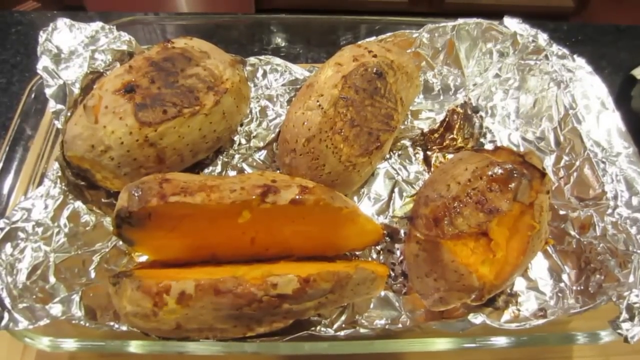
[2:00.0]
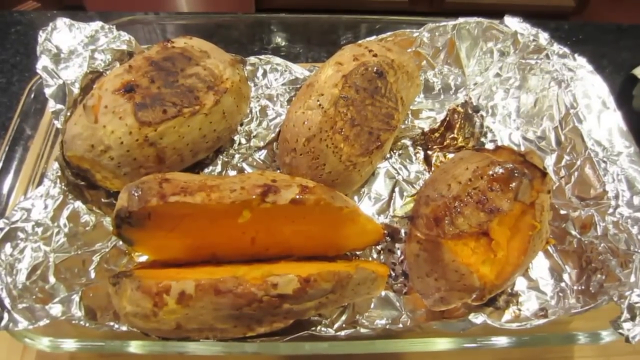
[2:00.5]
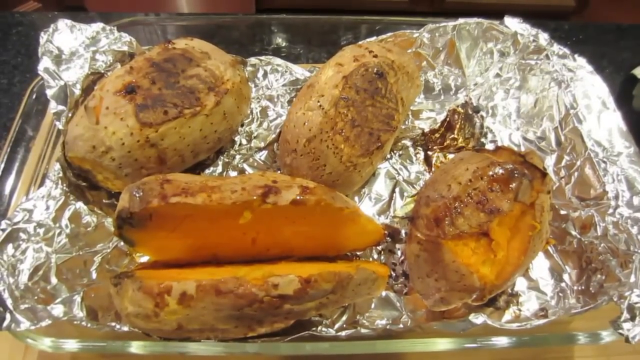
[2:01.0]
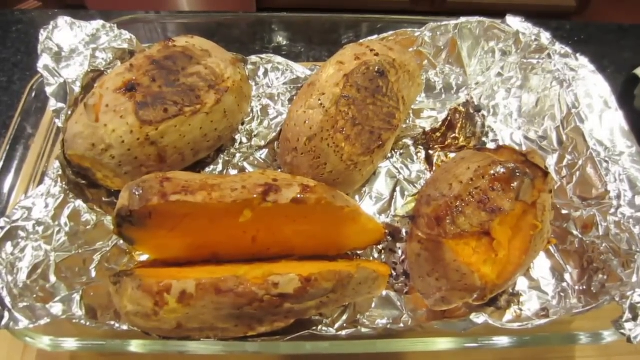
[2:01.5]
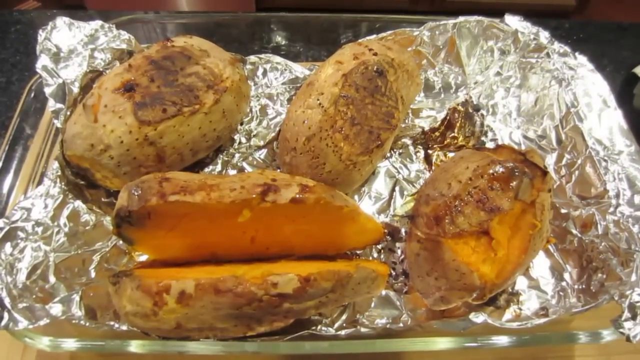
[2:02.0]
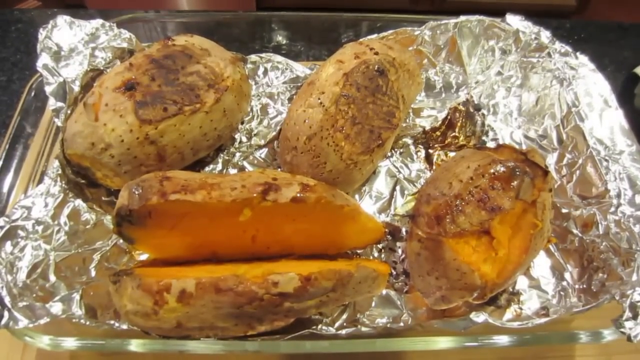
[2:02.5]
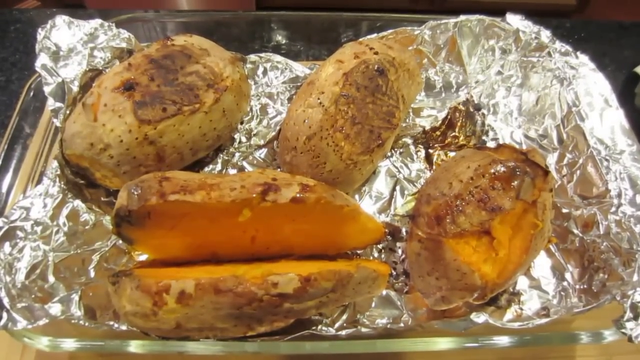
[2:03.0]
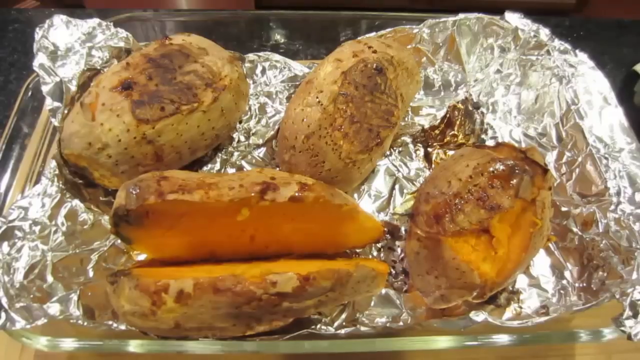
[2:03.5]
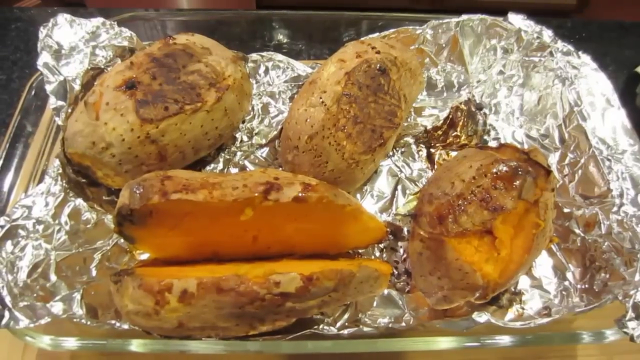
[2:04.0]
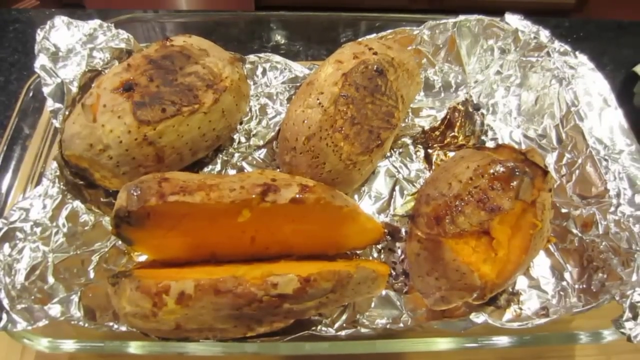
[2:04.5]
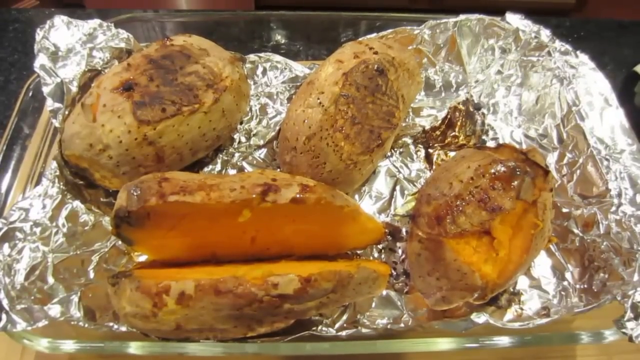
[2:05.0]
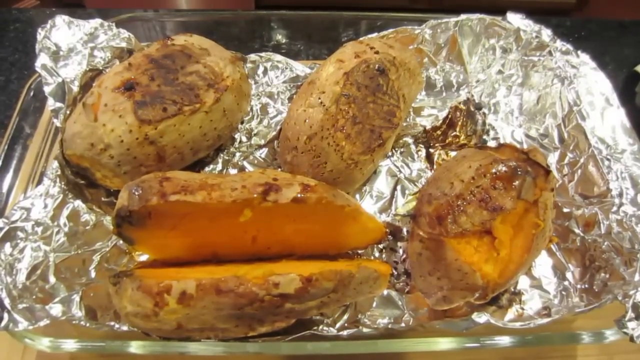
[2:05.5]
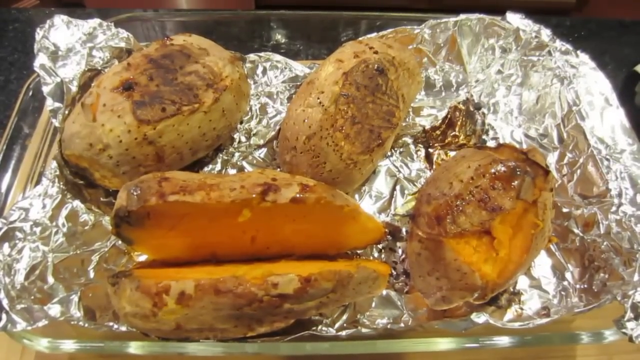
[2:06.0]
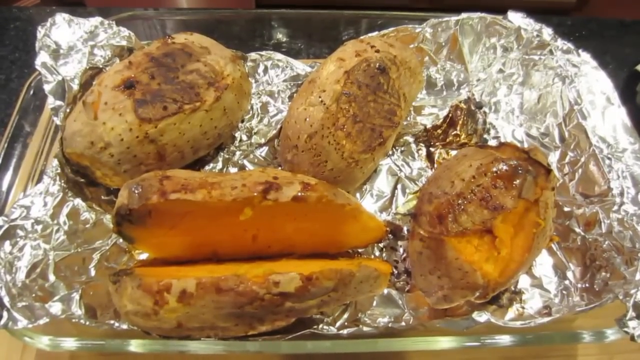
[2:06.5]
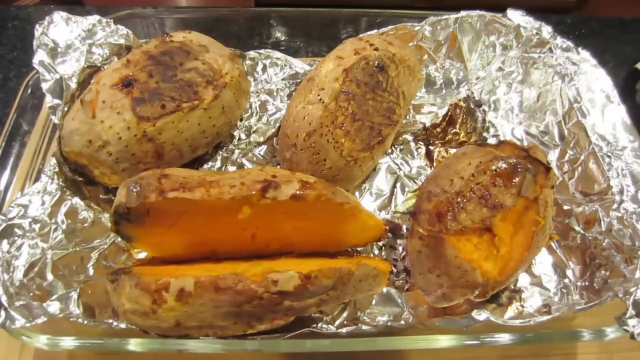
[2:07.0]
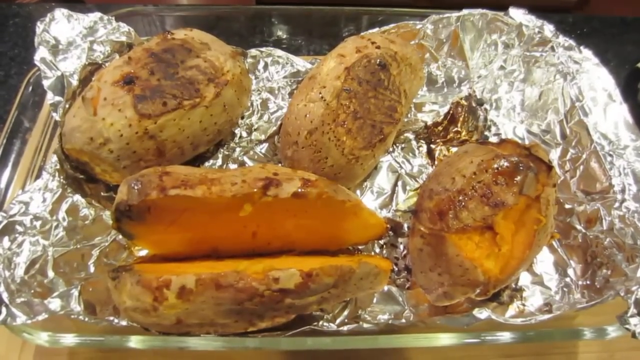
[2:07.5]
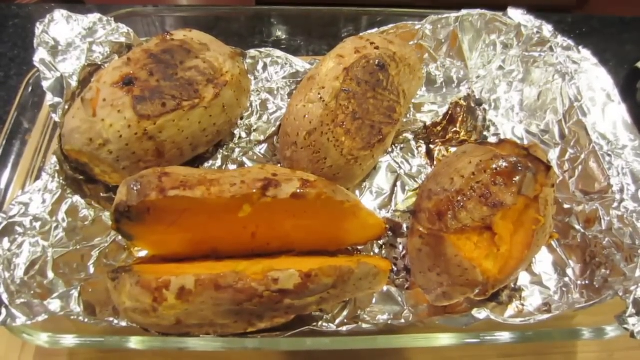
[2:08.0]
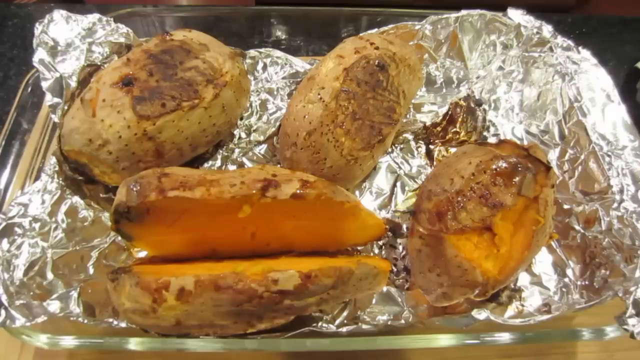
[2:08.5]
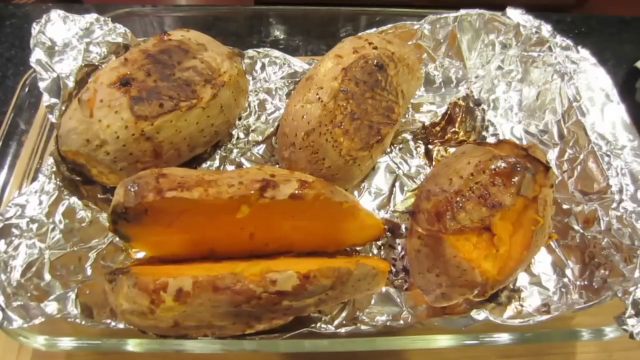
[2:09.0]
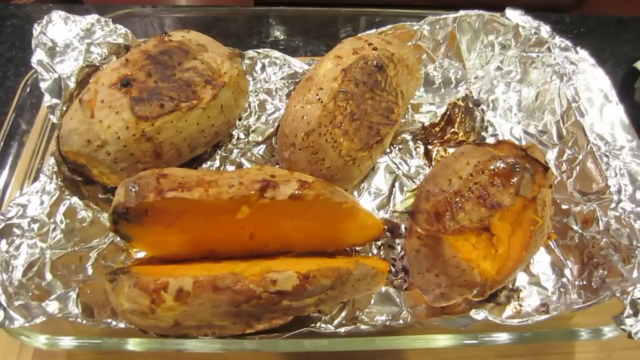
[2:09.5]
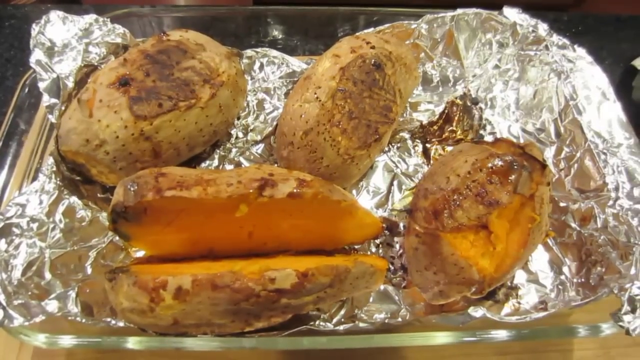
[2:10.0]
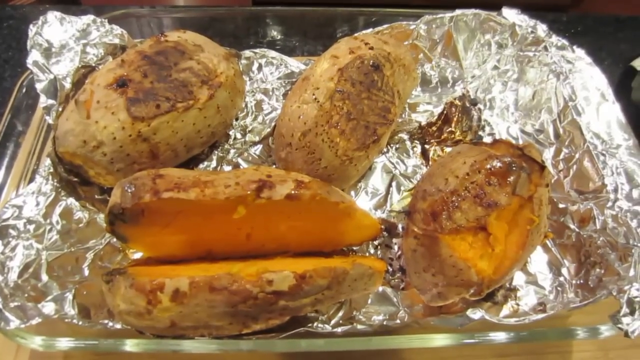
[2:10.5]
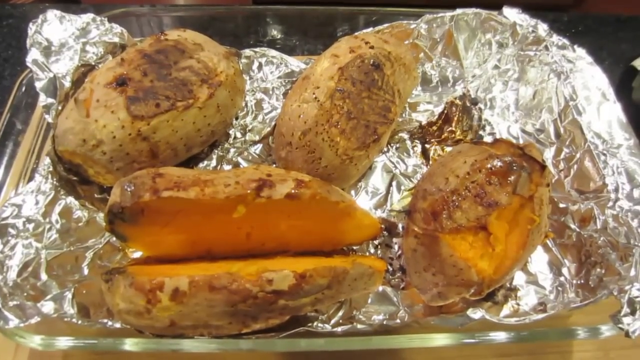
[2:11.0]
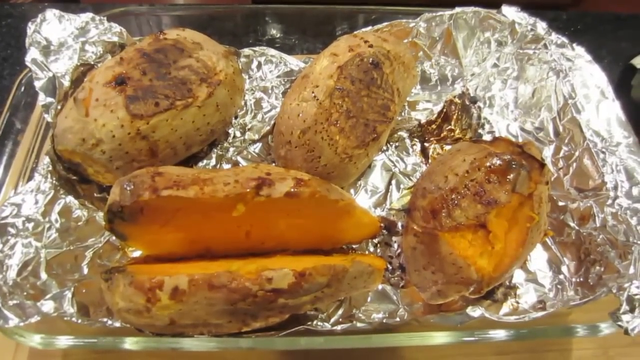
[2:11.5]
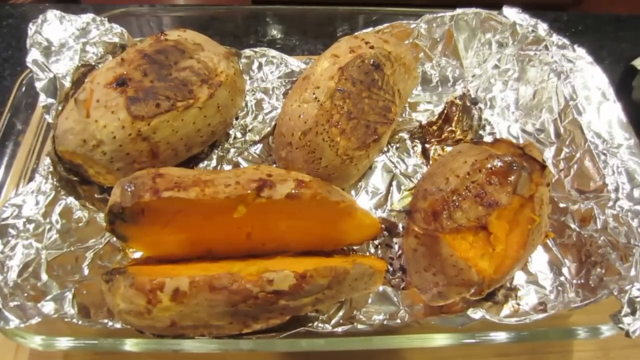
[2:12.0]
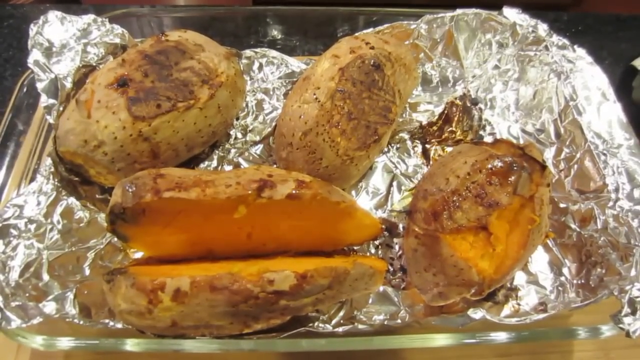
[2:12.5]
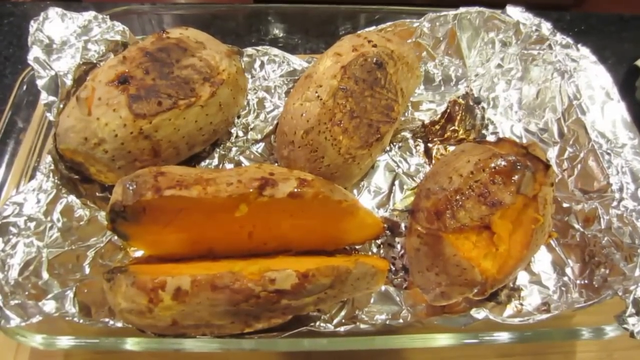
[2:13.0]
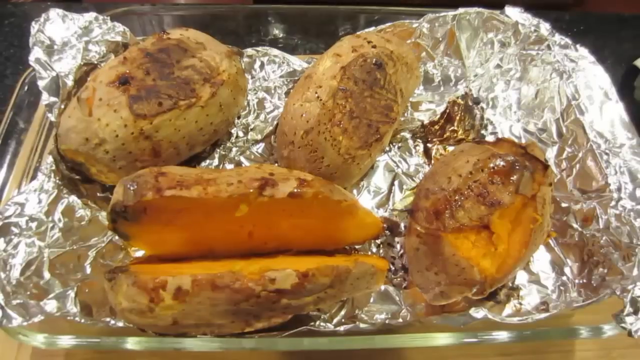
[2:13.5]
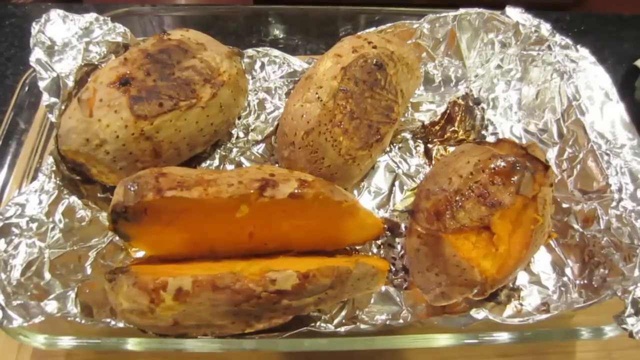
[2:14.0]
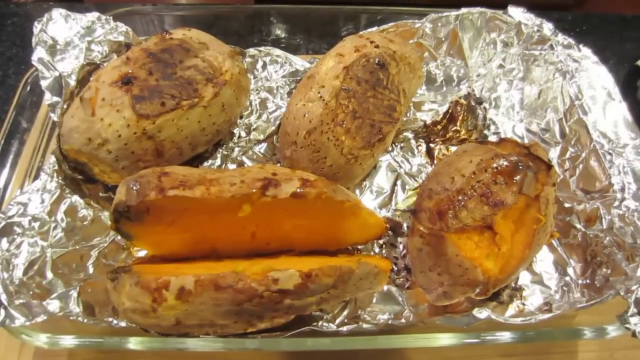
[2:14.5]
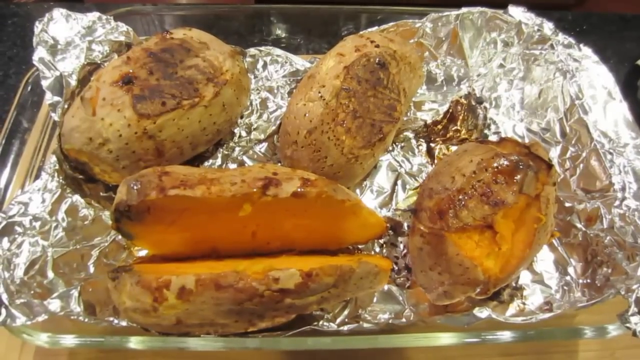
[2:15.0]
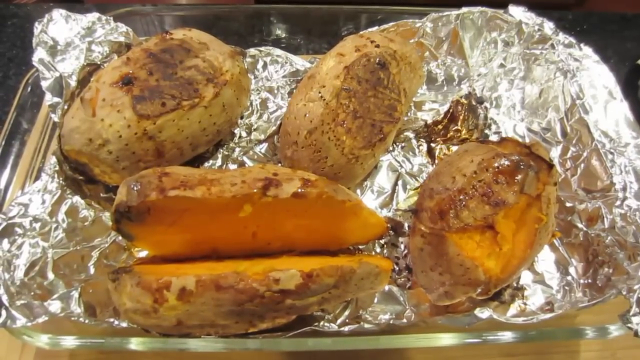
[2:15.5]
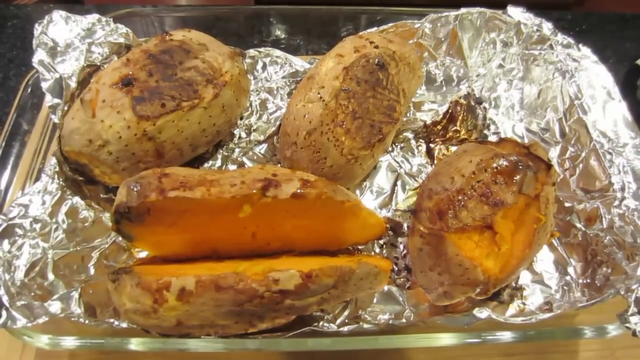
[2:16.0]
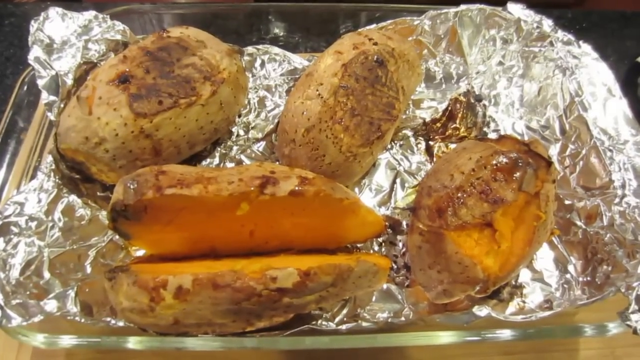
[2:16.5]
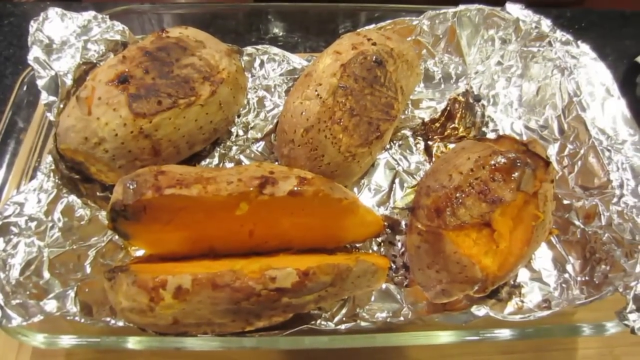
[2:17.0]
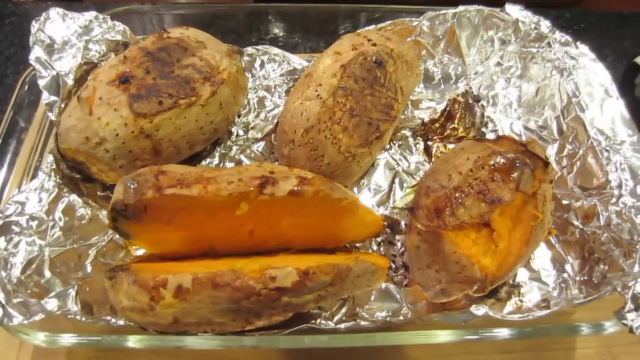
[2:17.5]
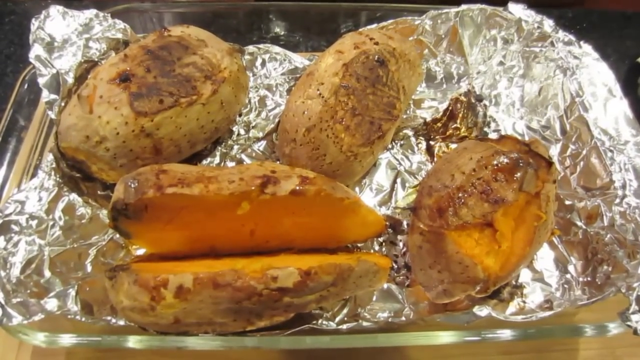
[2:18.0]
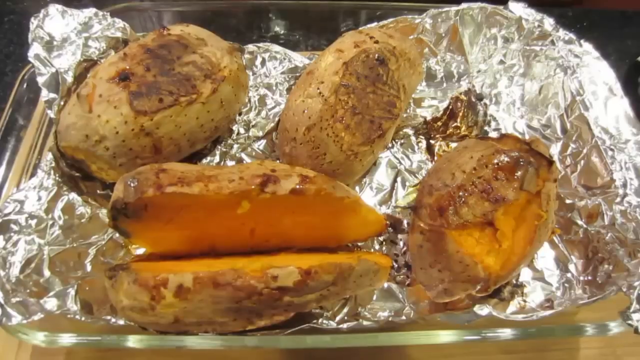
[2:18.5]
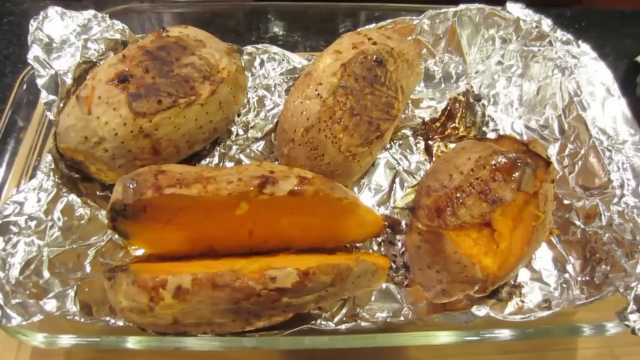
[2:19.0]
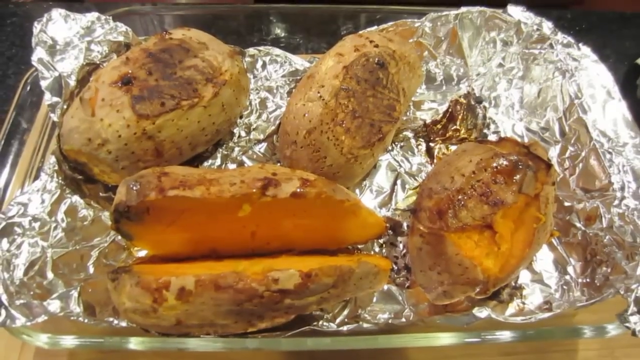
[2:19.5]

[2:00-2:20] Four sweet potatoes are arranged closely together on a crumpled piece of used aluminum foil laid out within a deep rectangular glass baking dish. The one in the lower left corner lies completely horizontally and is cut open horizontally in the middle, showing a dark orange inside; its tips are a little blackened, especially on the skin. Above it are two smaller sweet potatoes facing up with their top tips pointed slightly toward the right; they are uncut and unopened, with skins blackened where they have cooked, and covered in tiny holes that look like they're from forks. One more sweet potato, in the lower right corner of the dish, is more round than rectangular; it also points up with its top facing toward the right corner of the dish, and is uncut and covered in holes. All the sweet potatoes appear evenly cooked, as if cooked together at the same time.